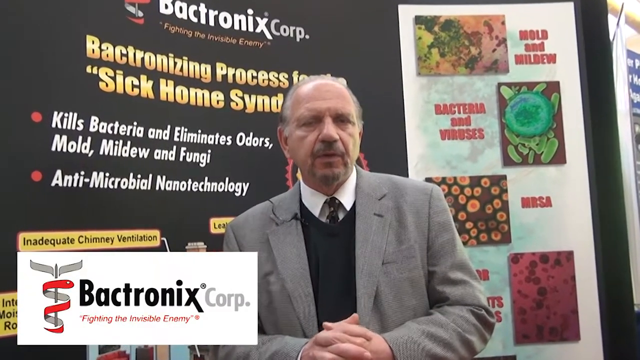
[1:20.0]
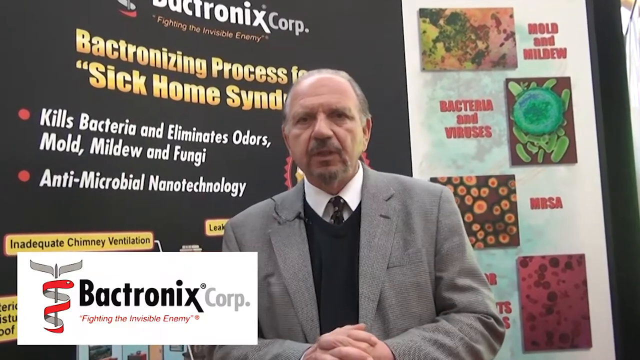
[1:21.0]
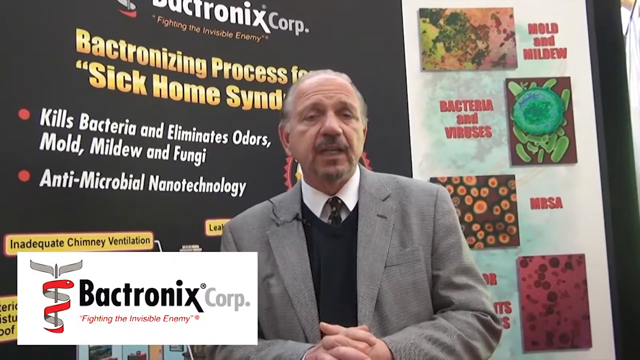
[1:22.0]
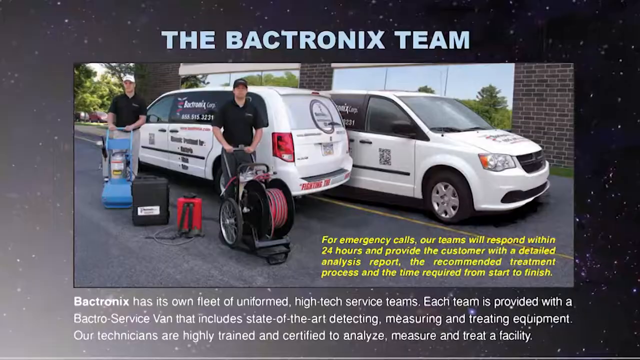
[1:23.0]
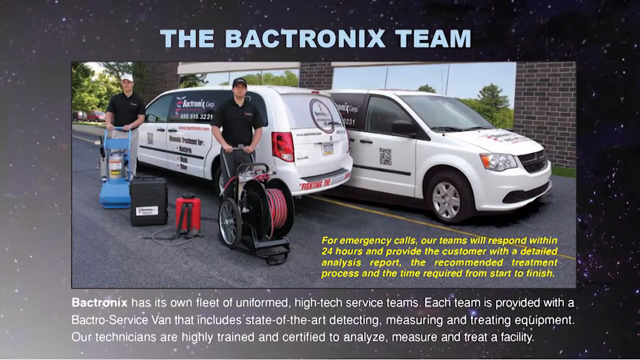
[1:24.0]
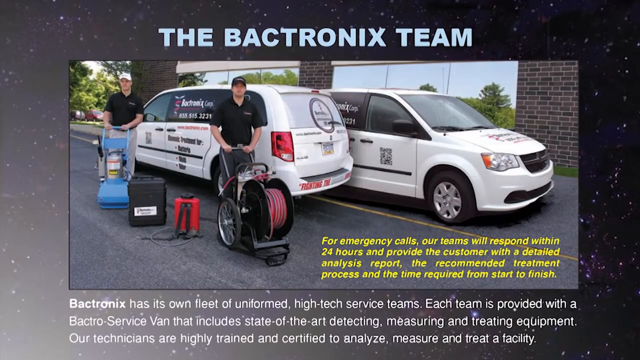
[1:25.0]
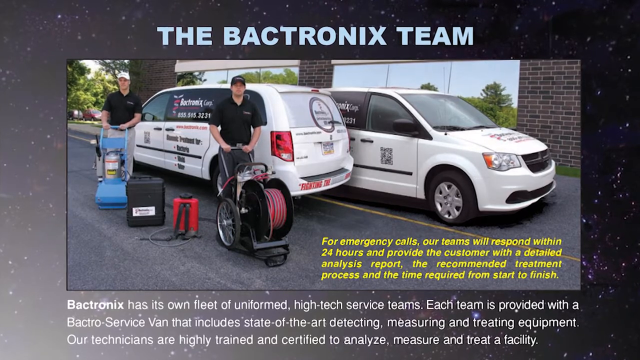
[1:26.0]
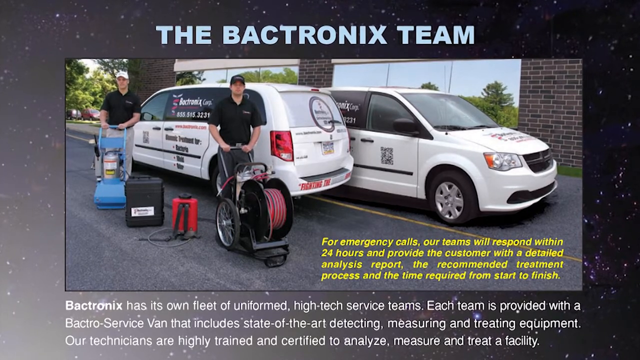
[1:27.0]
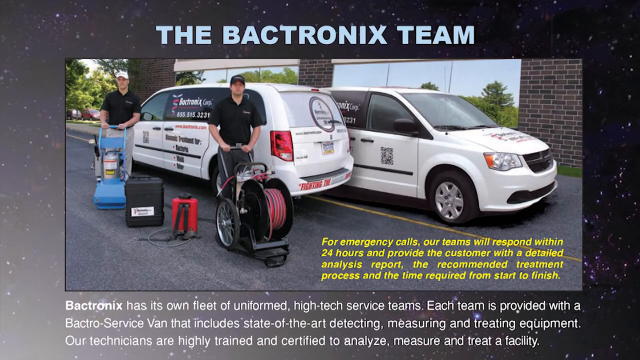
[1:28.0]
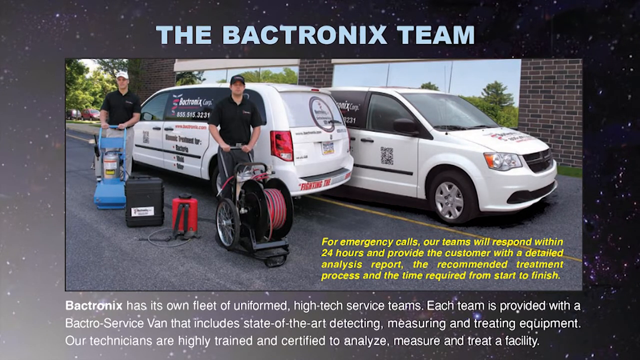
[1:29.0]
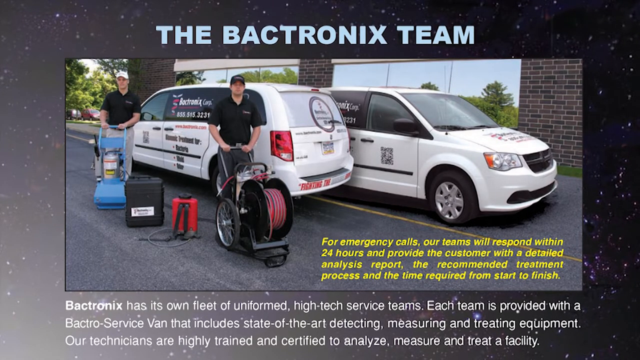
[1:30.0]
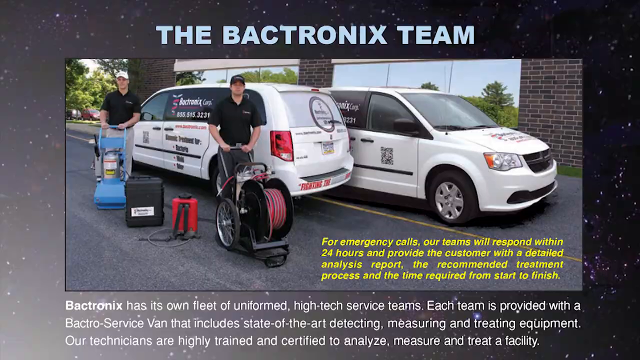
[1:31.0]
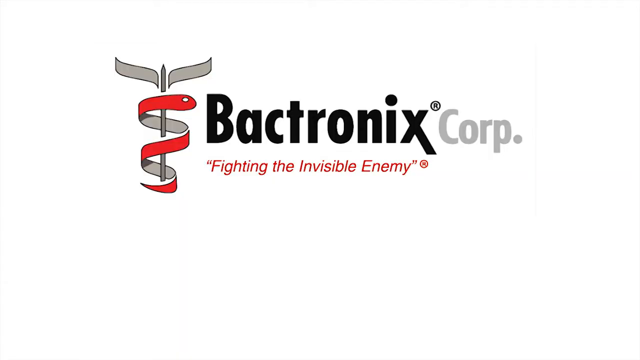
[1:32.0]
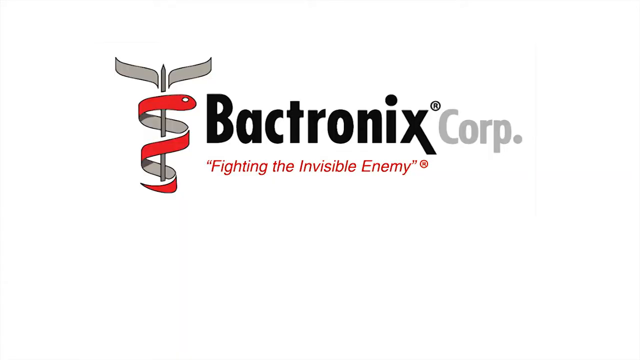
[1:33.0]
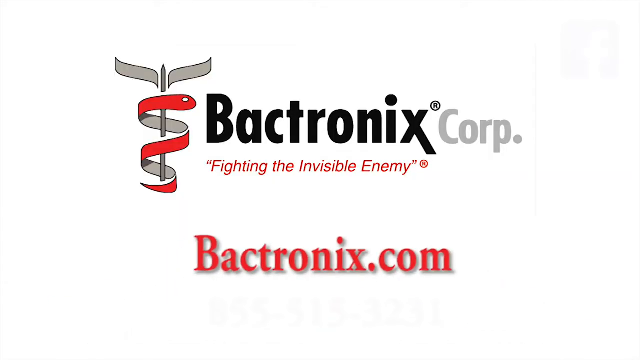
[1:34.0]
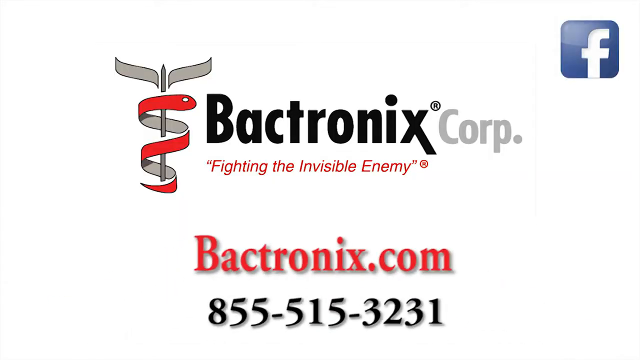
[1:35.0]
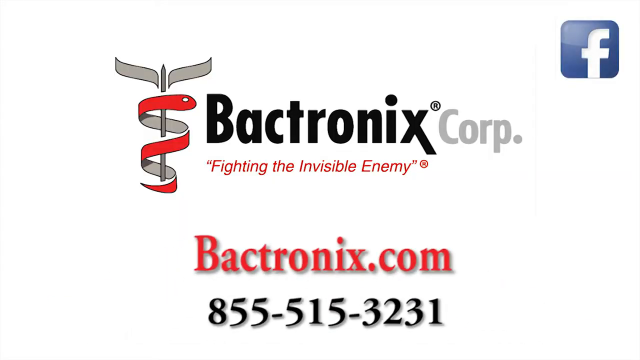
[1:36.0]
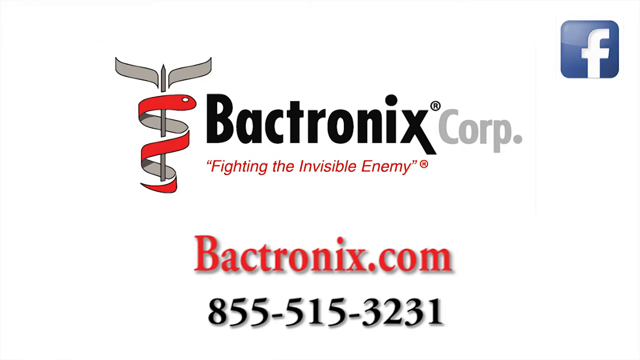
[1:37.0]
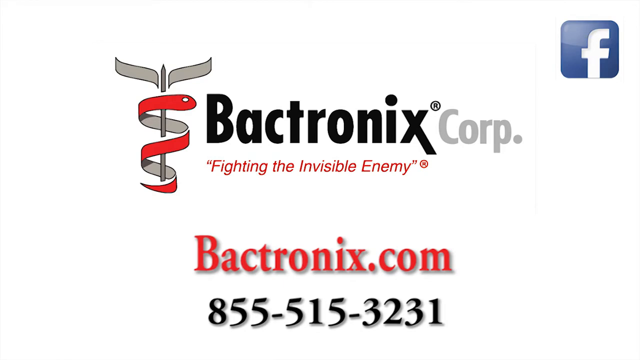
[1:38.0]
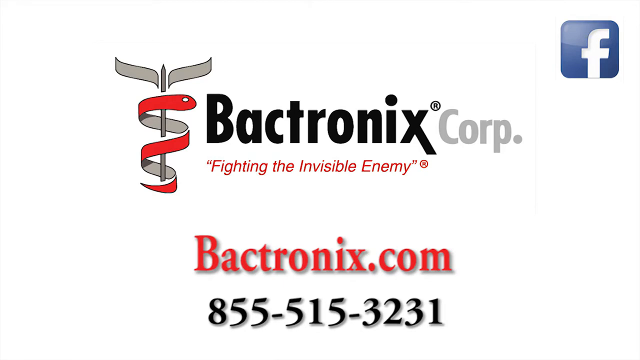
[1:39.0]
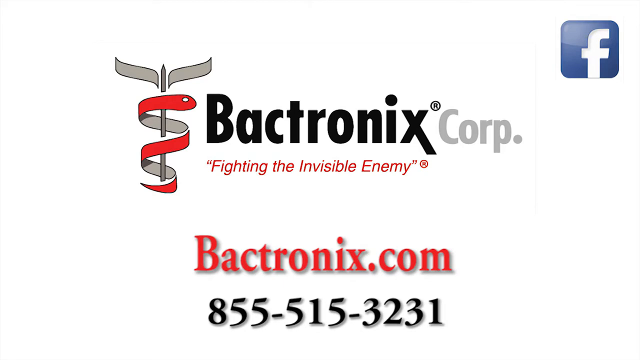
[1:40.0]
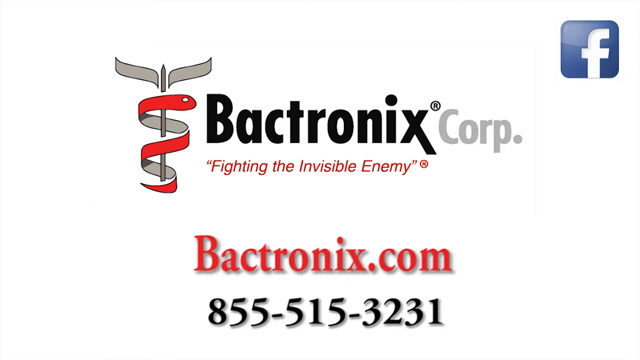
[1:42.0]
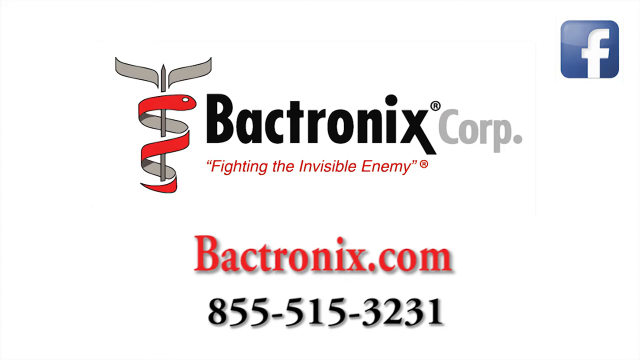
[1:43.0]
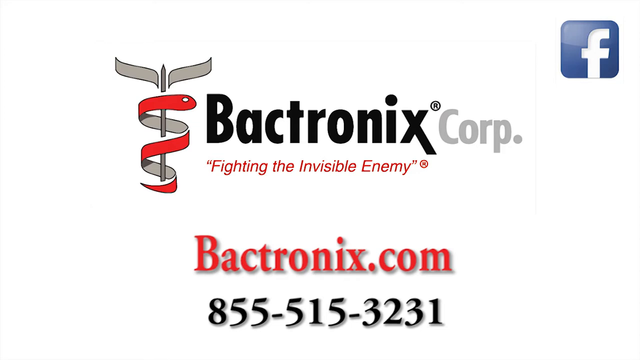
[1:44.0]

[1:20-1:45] A man stands in front of a large backdrop advertising the Bactronix Corporation and its process that kills bacteria and eliminates odors, mold, mildew, and fungi. In the lower left of the screen is the Bactronix Corporation logo, a stylized red and gray Caduceus. The man speaks directly to the camera, wearing a light gray jacket, a black sweater vest, and a white collared shirt and tie. The shot changes to a photograph labeled "The Bactronix Team" above it. Two white vans are parked next to each other facing in different directions, and two men stand outside them with their hands resting on the handles of what looks like cleaning equipment: one looks like a black reel with a red hose wrapped around it, the other looks like a large blue vacuum cleaner of some kind. Both men wear short-sleeved black shirts and baseball caps. Between them are two more pieces of equipment, one looking like a red backpack and the other like a large black plastic case. Text at the bottom of the photo reads, "For emergency calls, our teams will respond within 24 hours and provide the customer with a detailed analysis report, the recommended treatment process and the time required from start to finish." Below the photograph, more text reads, "Bactronix has its own fleet of uniformed high-tech service teams. Each team is provided with a Bactro-Service Van that includes state-of-the-art detecting, measuring and treating equipment. Our technicians are highly trained and certified to analyze, measure and treat a facility." The video ends with a title card bearing the Bactronix Corp. name and logo.